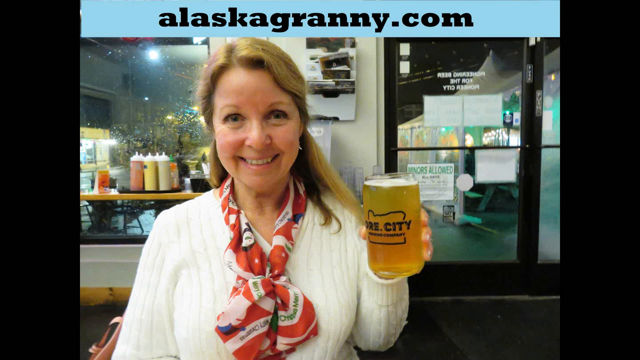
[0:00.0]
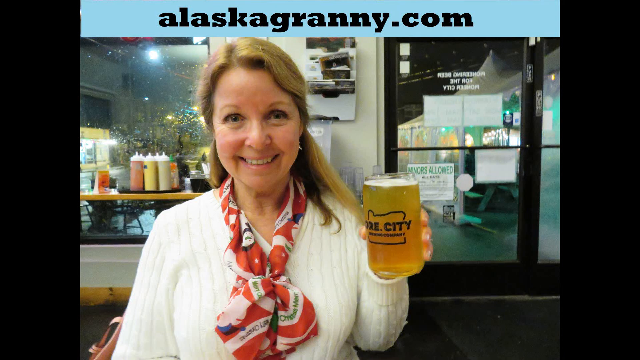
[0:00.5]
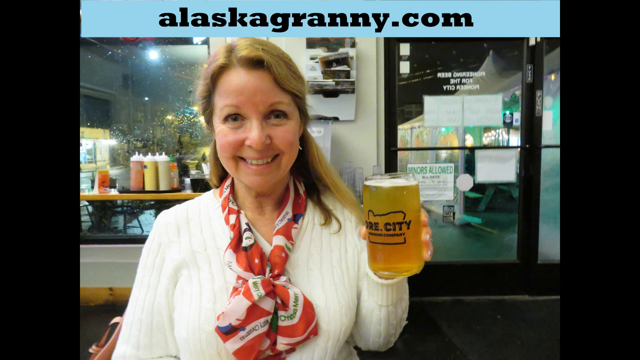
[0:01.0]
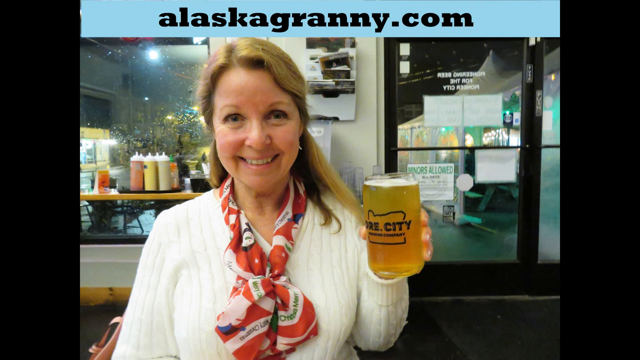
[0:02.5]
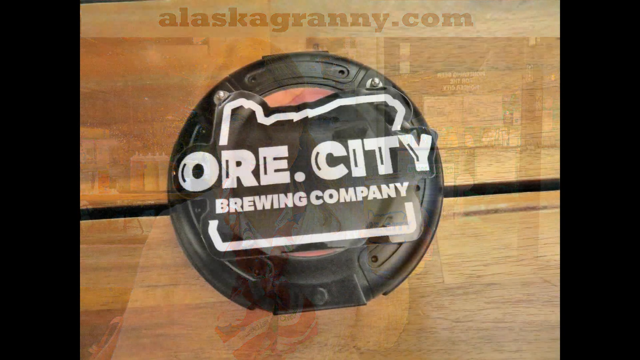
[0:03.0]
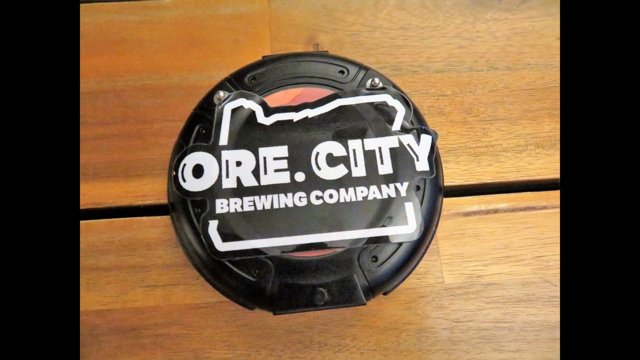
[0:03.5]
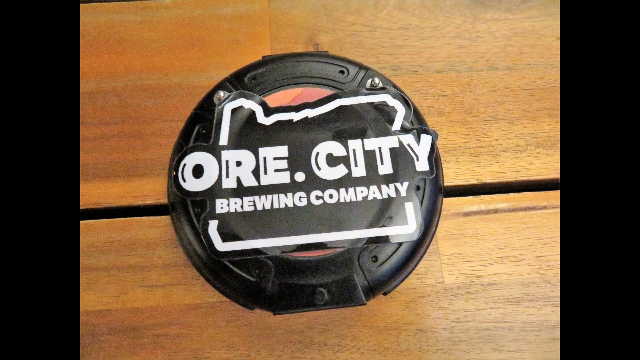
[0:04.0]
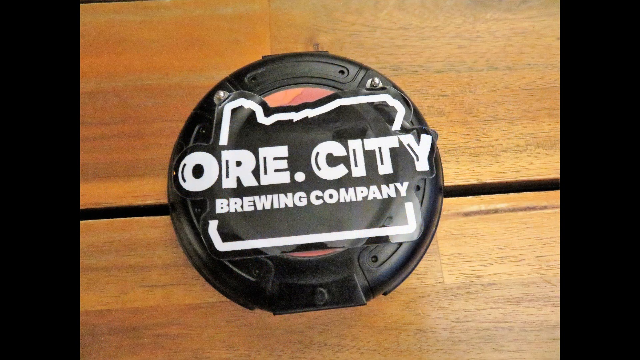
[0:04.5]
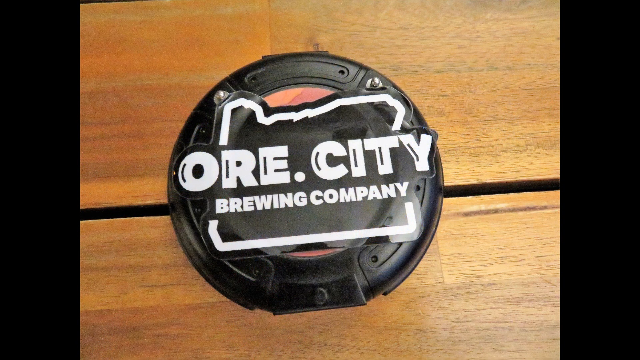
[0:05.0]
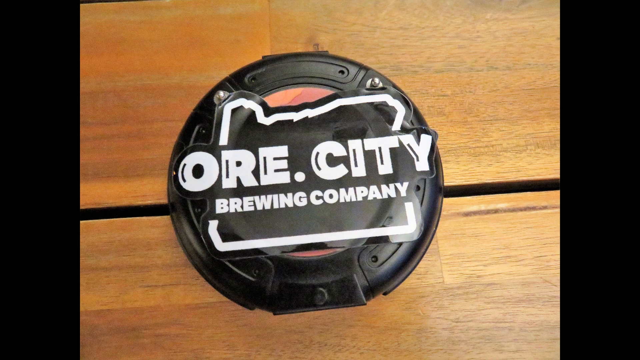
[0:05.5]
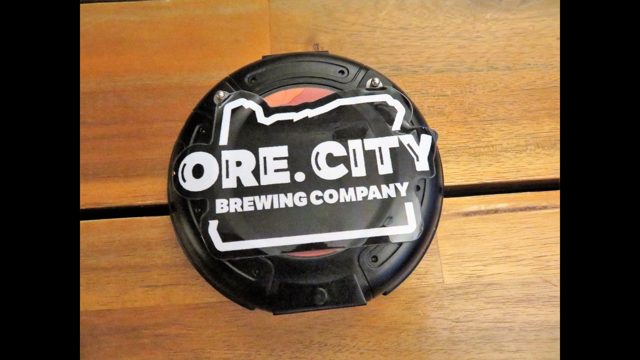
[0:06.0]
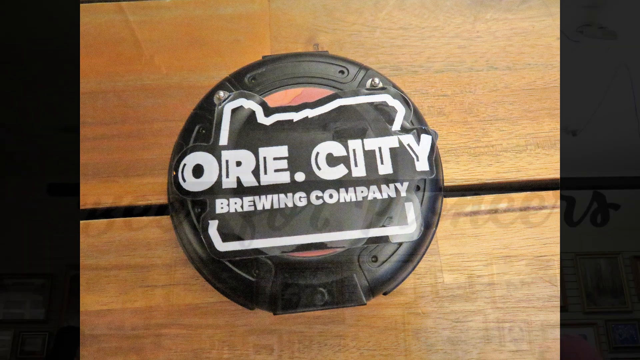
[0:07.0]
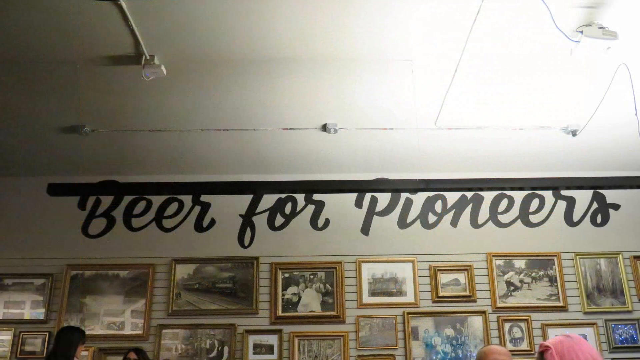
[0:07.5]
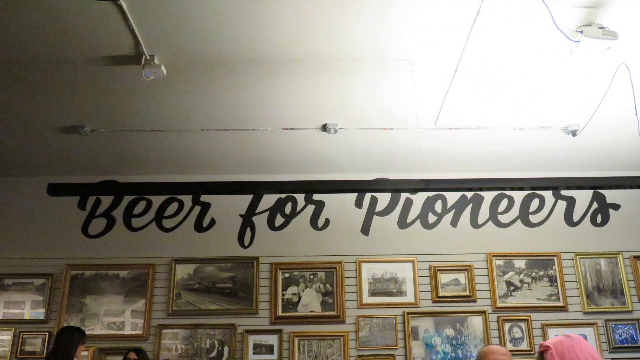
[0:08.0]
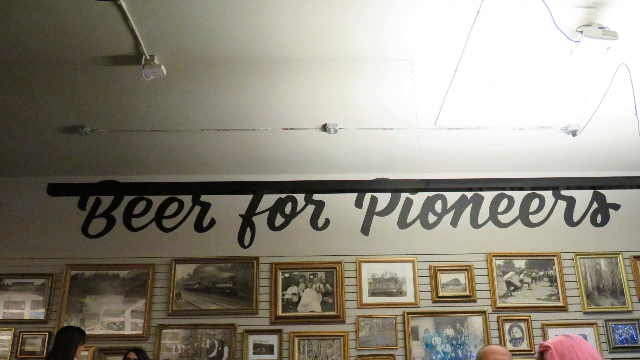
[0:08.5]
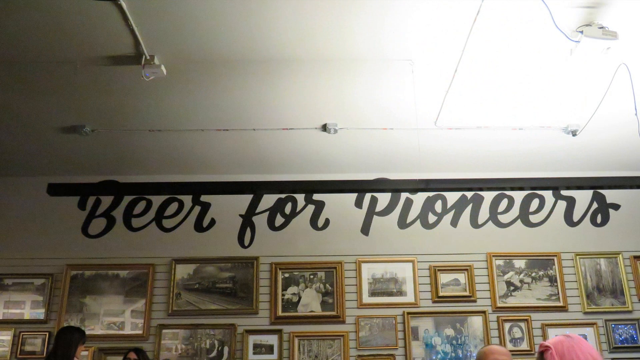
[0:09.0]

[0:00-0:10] A young woman holds a cup that appears to be full of beer. Writing about beer appears everywhere, and the word "Pioneer" is visible. The room where she stands contains many things, including pictures and canvases; it is unclear whether the place is a house.